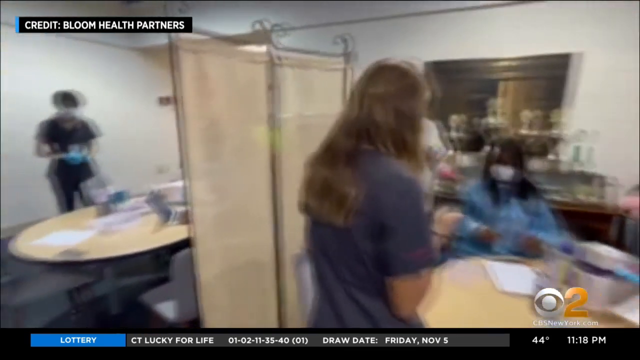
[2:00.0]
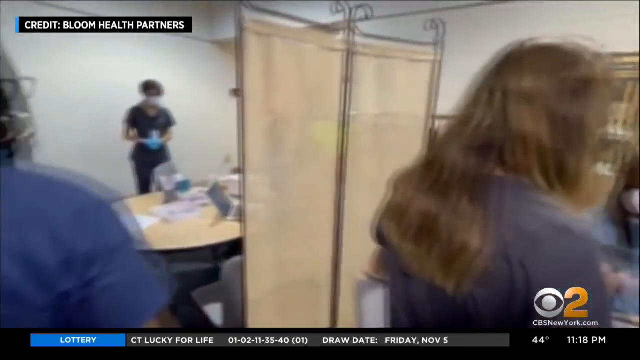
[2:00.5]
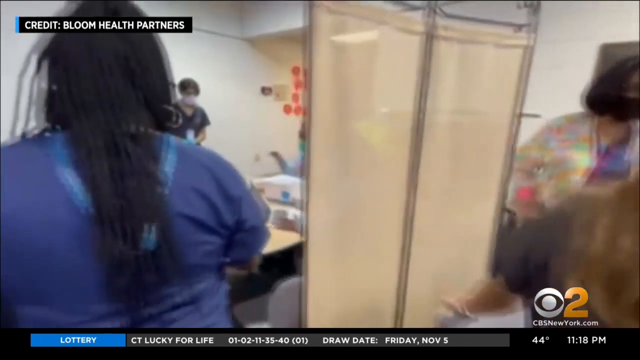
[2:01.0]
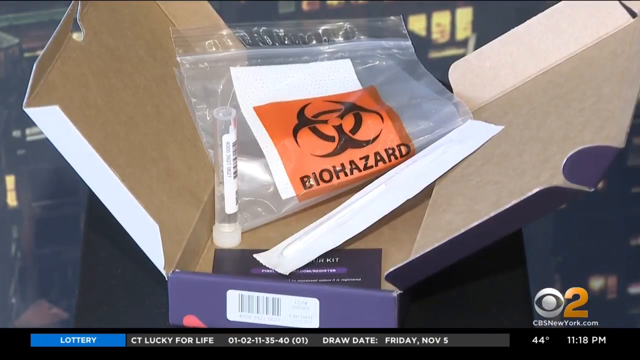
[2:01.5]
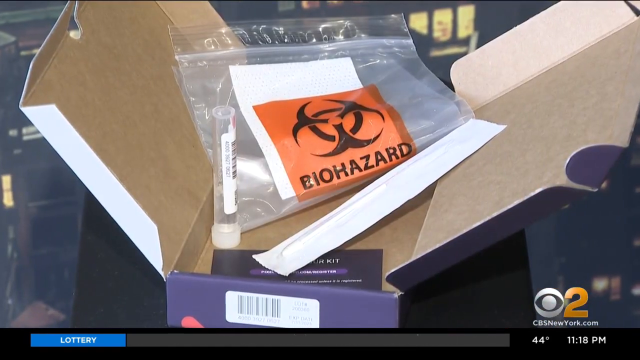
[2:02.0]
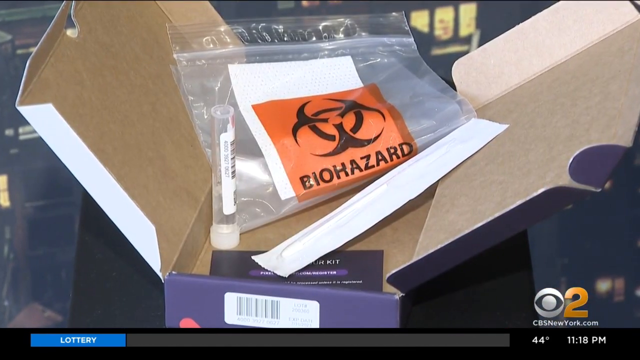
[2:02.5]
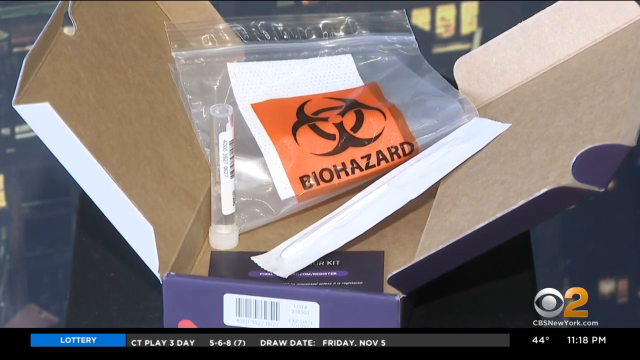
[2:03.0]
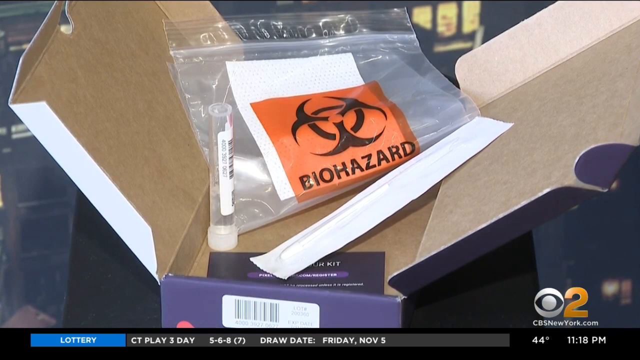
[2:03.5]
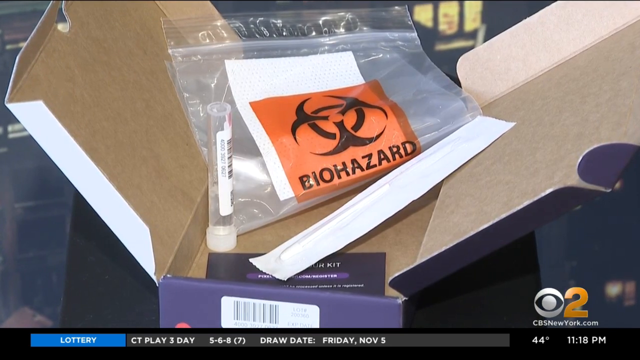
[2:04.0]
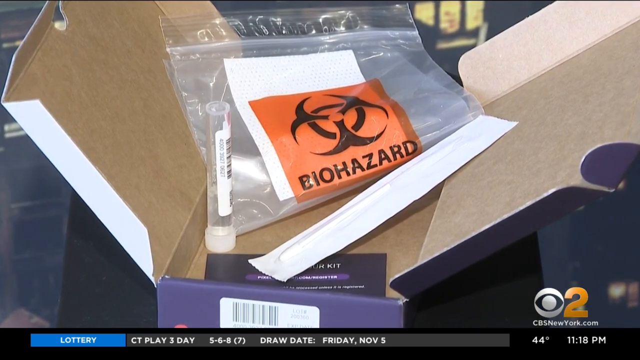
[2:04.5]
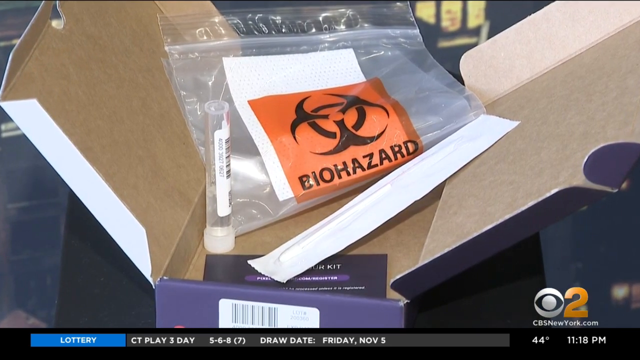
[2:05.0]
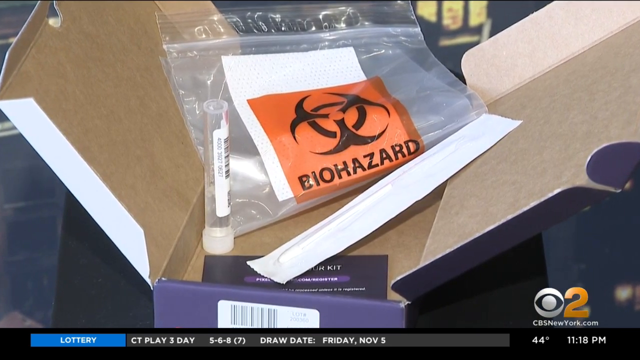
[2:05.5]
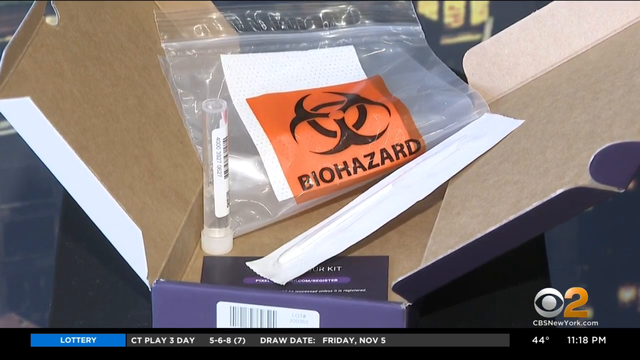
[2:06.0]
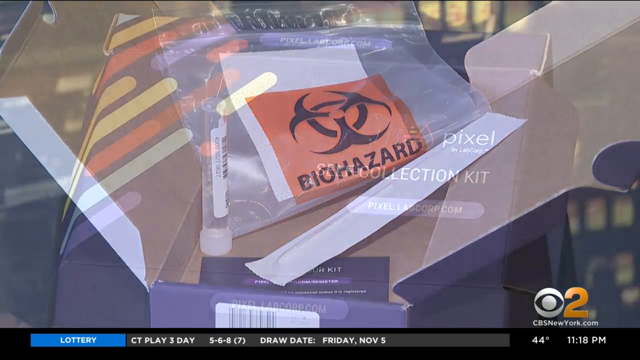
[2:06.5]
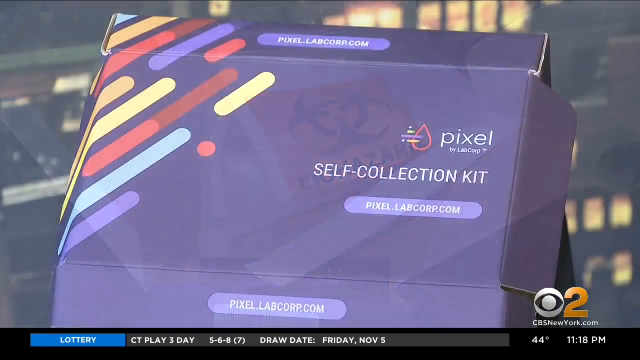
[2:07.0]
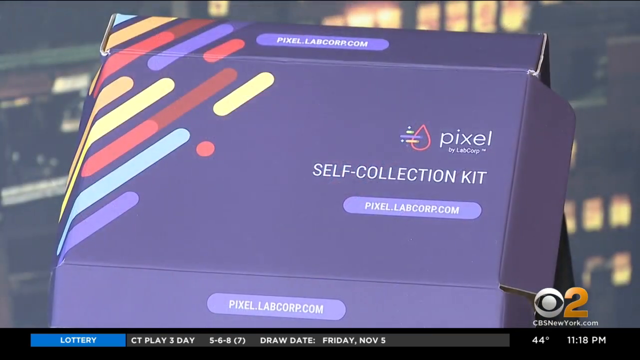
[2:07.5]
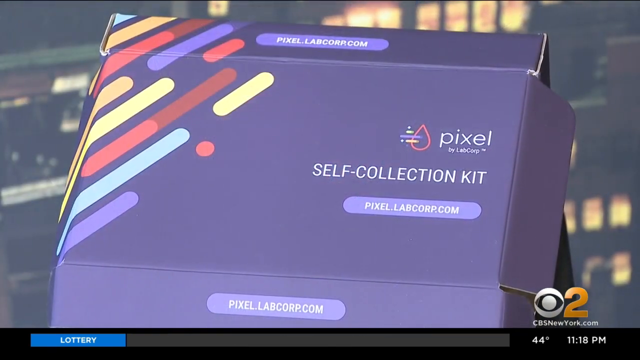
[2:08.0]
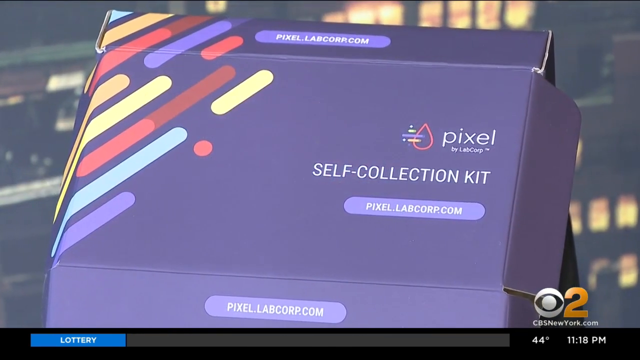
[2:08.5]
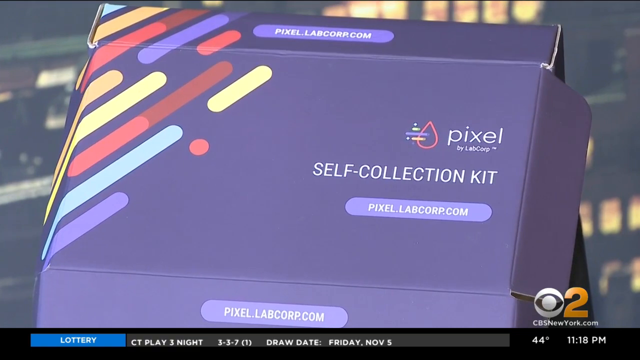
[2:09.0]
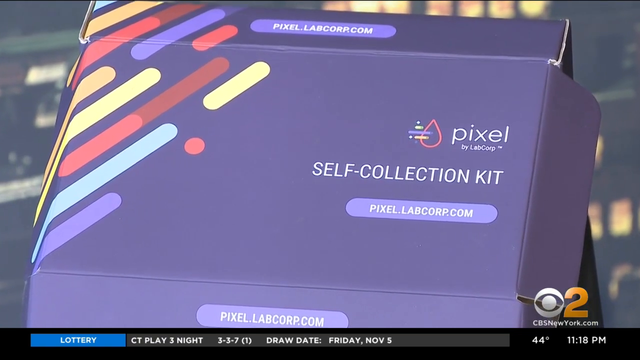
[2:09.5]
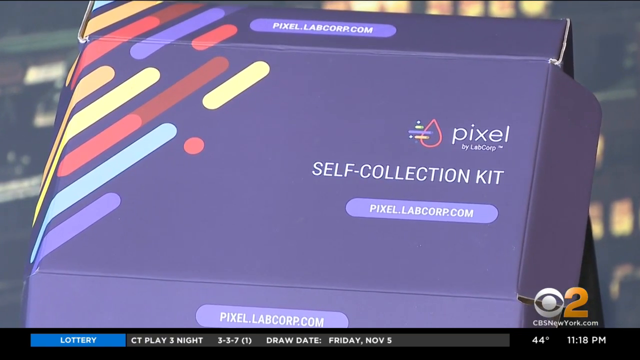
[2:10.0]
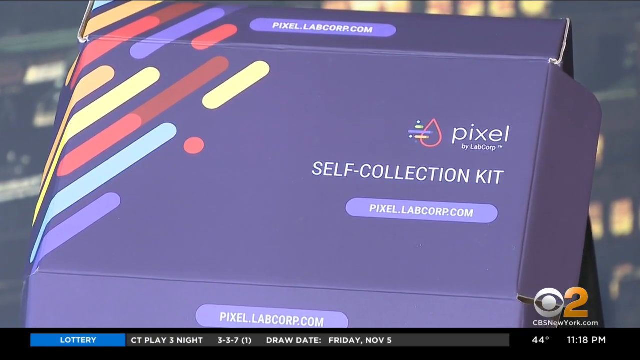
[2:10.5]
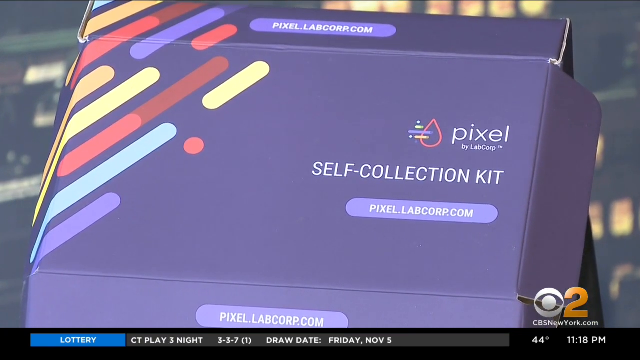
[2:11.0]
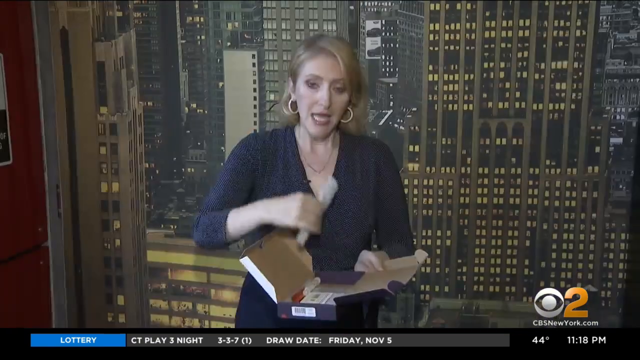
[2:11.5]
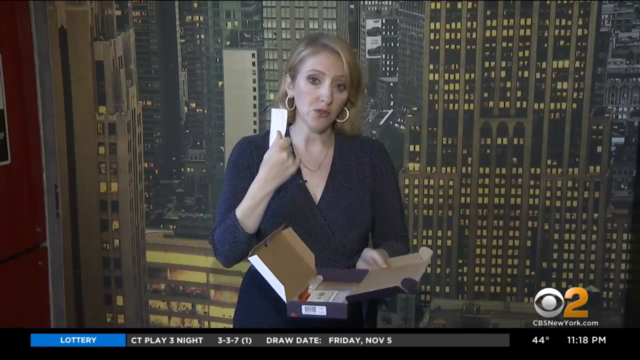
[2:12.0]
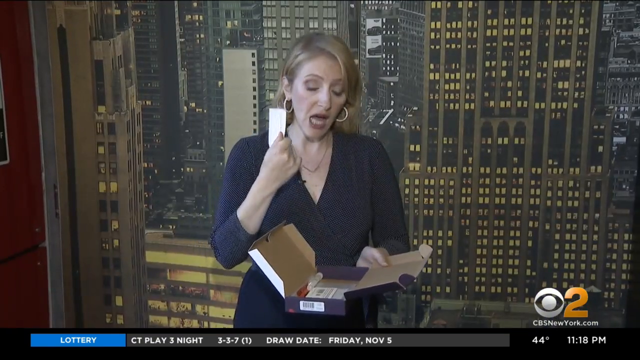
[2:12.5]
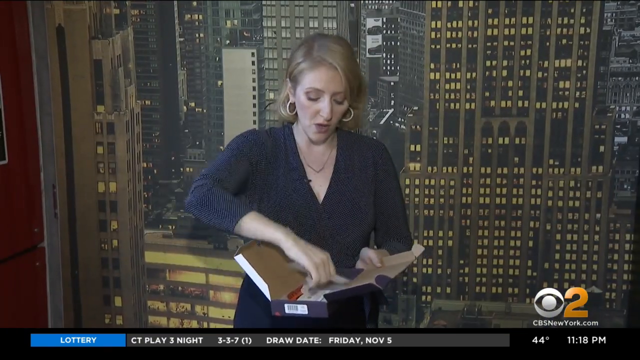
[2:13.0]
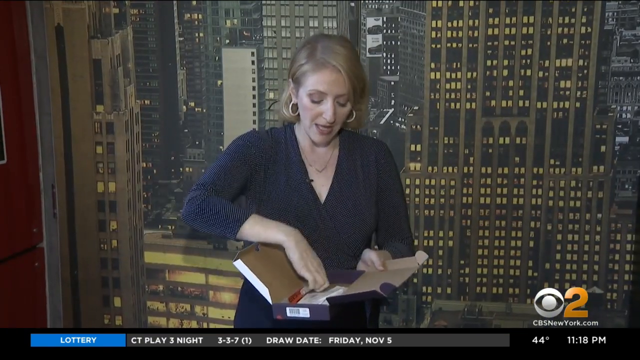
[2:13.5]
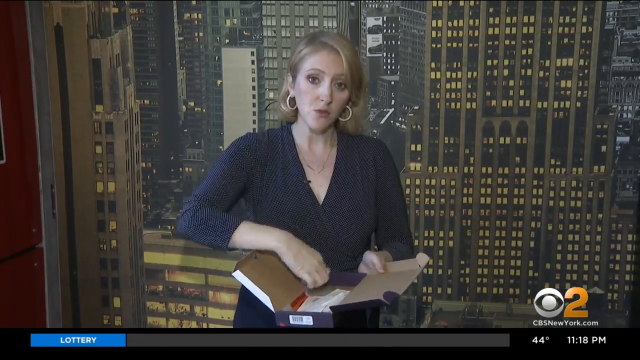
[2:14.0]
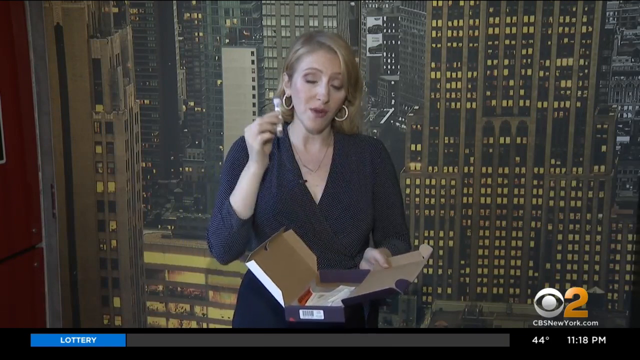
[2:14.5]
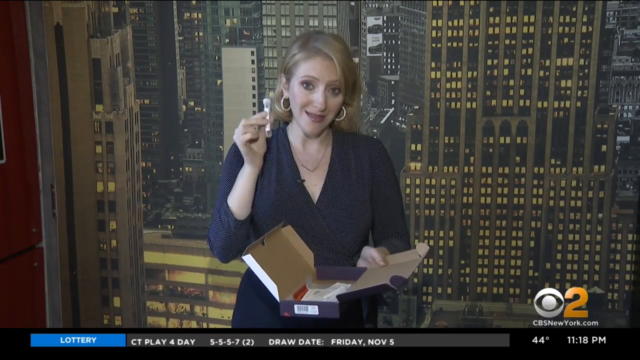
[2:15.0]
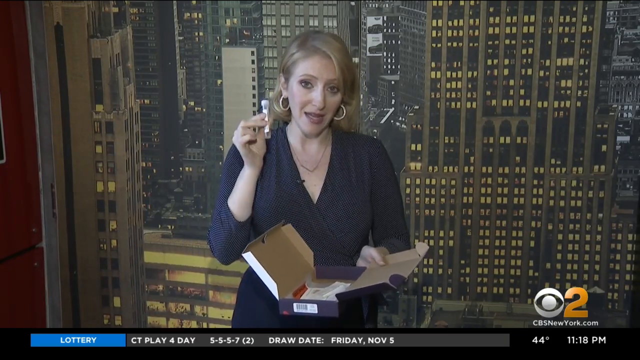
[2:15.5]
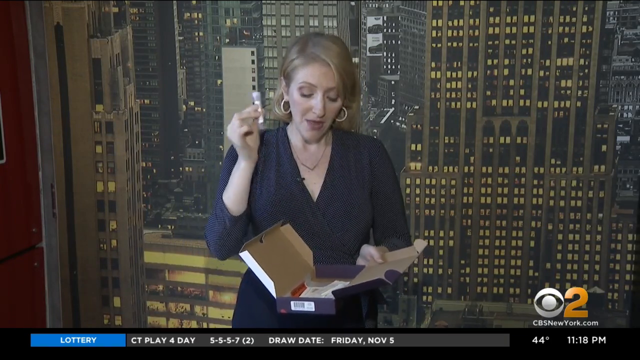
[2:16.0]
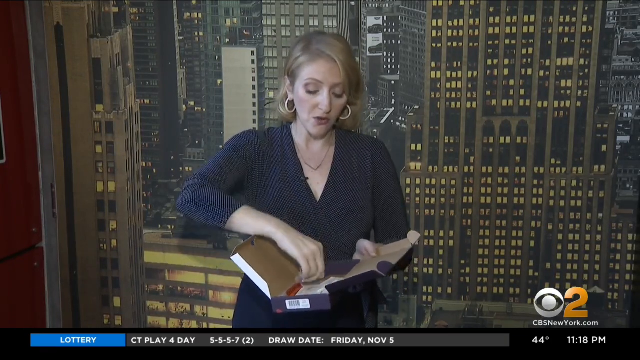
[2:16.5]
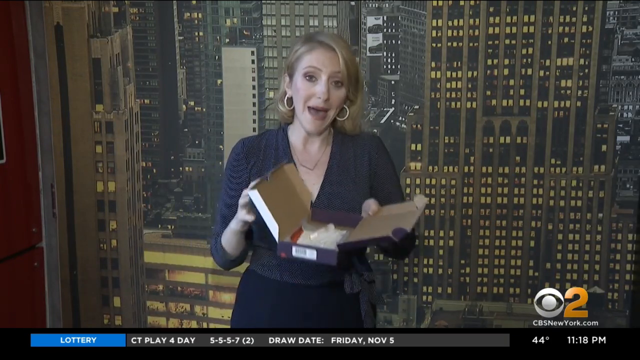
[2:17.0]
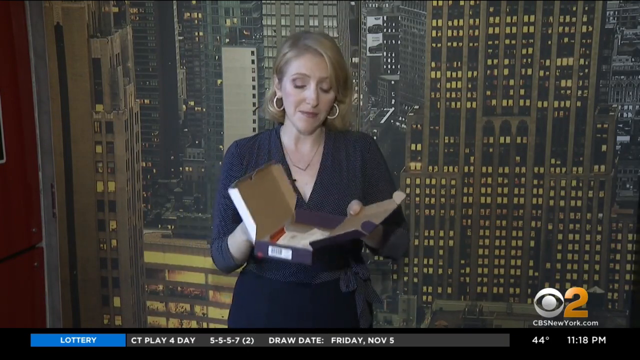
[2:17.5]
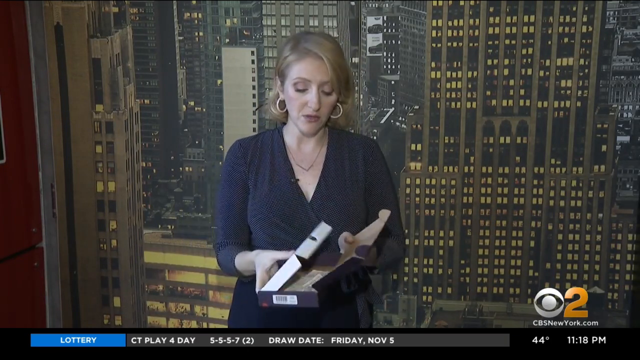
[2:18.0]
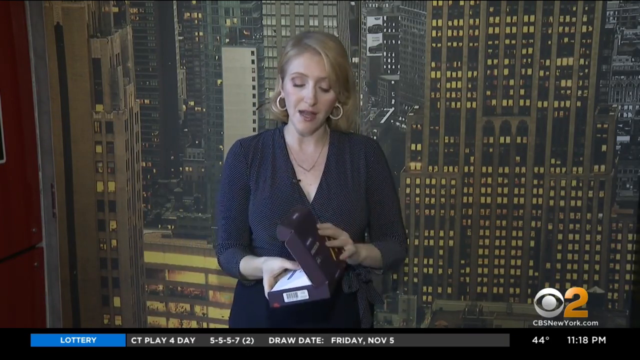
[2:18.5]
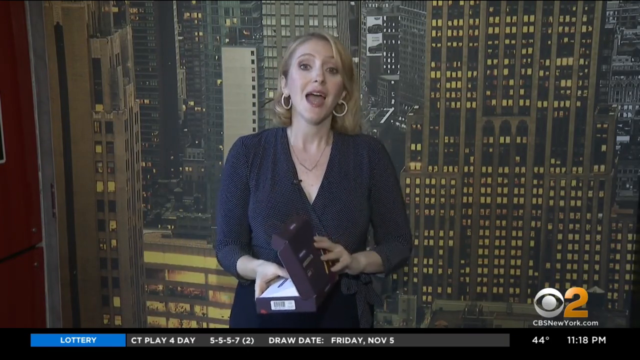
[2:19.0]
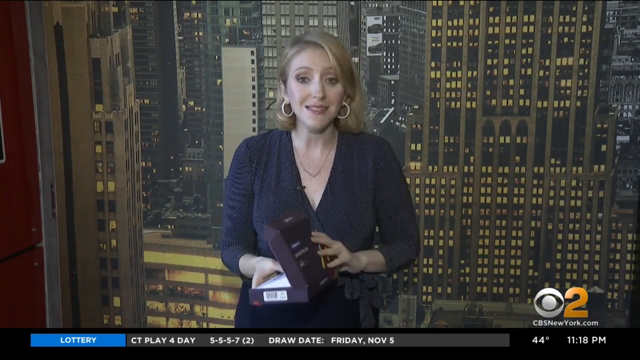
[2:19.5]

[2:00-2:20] The inside of an opened box, which appears to be a COVID-19 testing kit, shows three items: an unopened swab stick, a vial with a barcode and a number on a sticker on its side, and a baggie with the word "biohazard" and the biohazard symbol in orange and black on the front. Next comes a picture of a self-collection kit from "pixel.labcorp.com." A woman then stands holding that same LabCorp self-collection kit, talking as she starts to fold it closed. She wears a dress, a necklace, and earrings, and looks like the same woman from the beginning of the video.